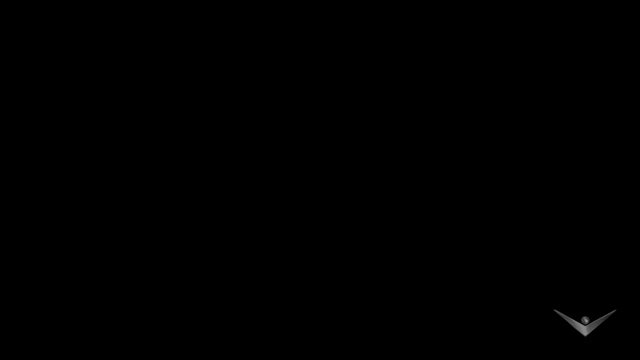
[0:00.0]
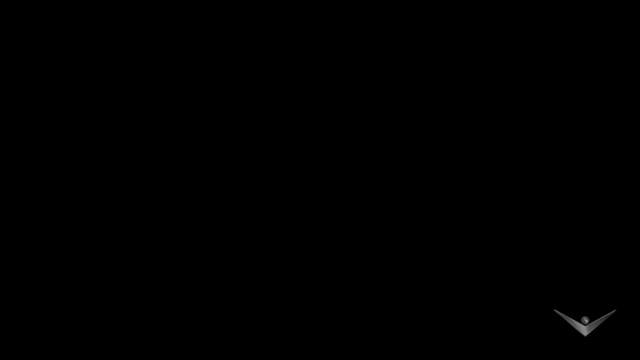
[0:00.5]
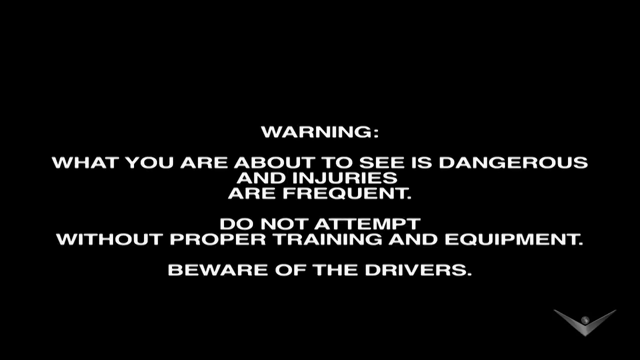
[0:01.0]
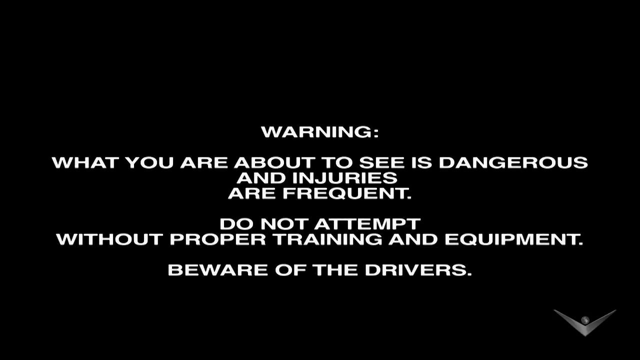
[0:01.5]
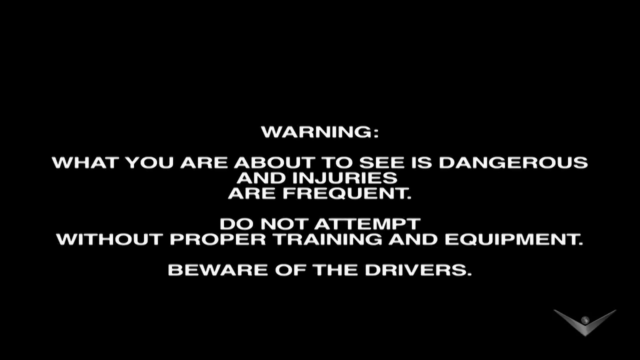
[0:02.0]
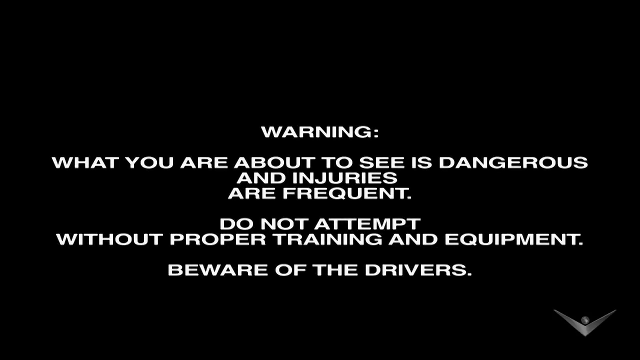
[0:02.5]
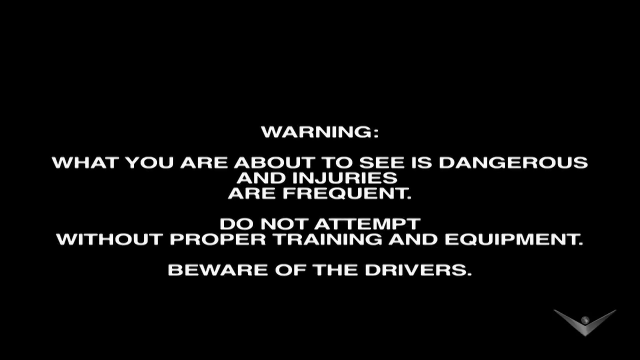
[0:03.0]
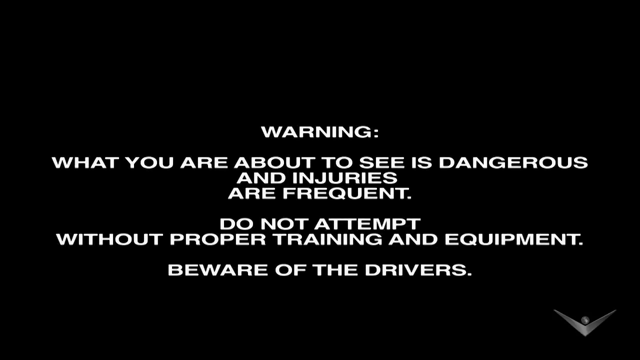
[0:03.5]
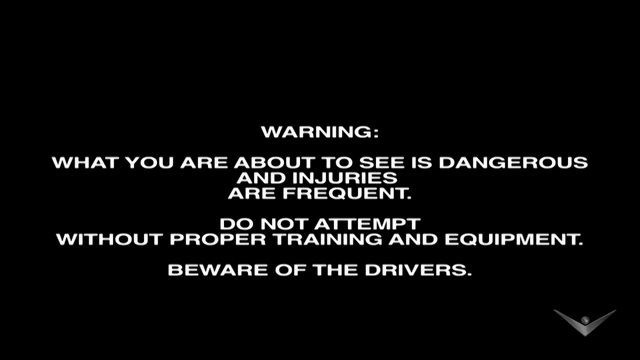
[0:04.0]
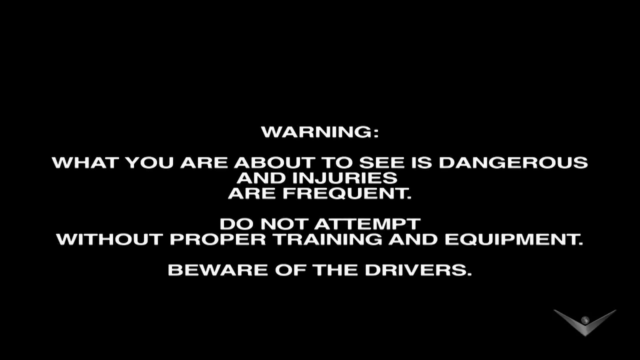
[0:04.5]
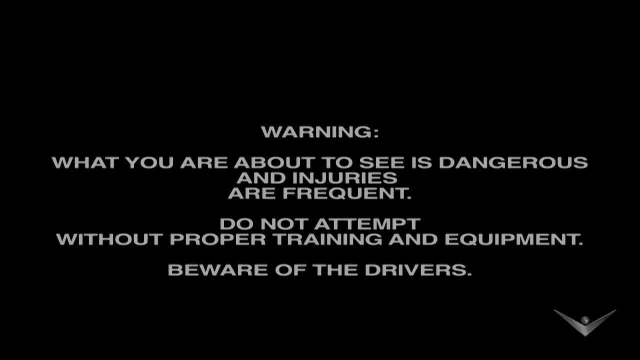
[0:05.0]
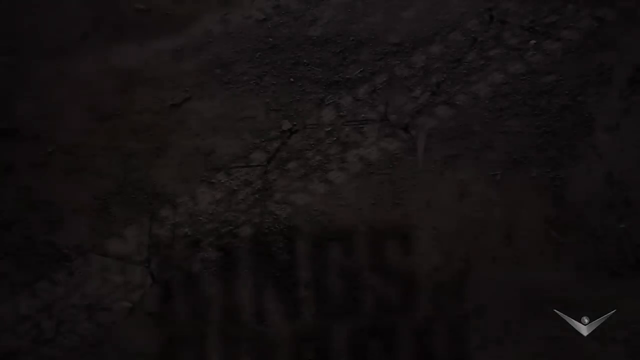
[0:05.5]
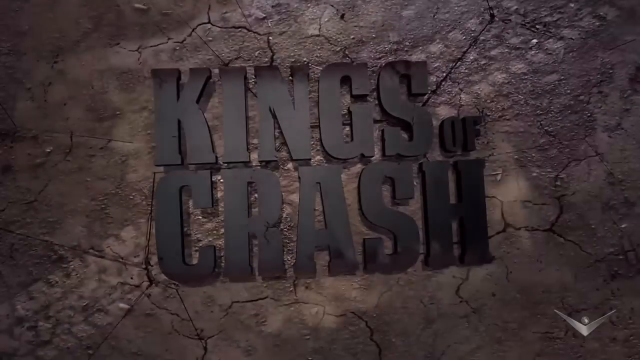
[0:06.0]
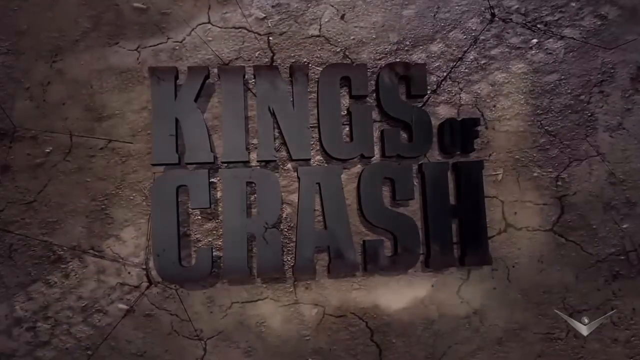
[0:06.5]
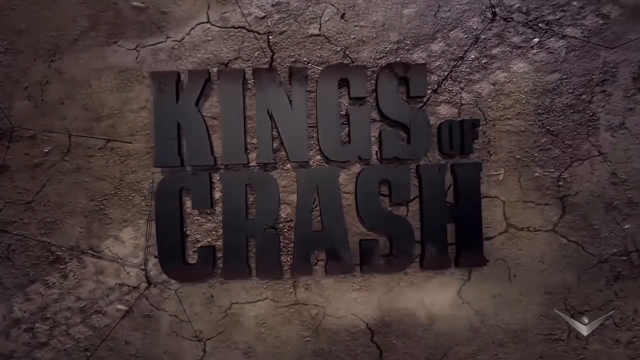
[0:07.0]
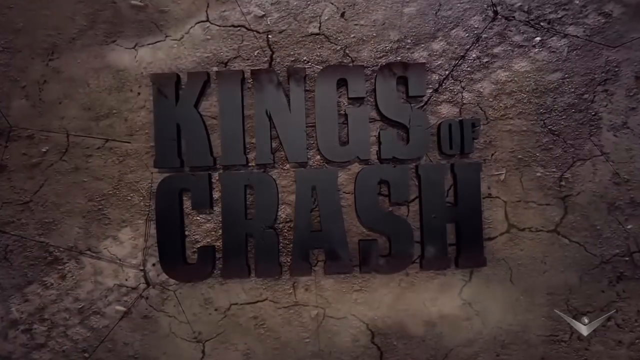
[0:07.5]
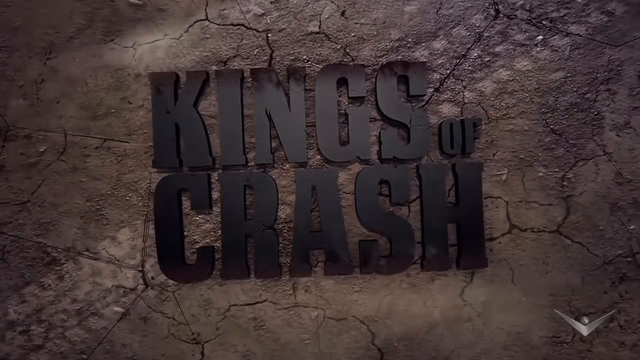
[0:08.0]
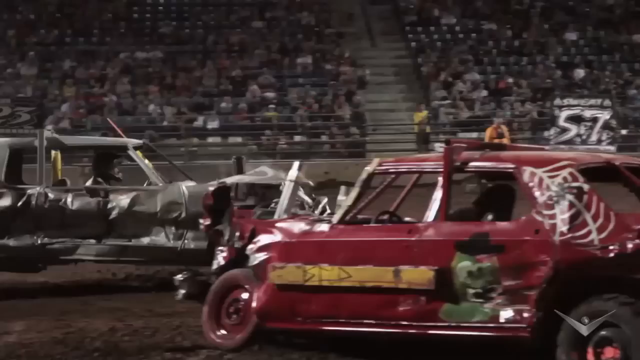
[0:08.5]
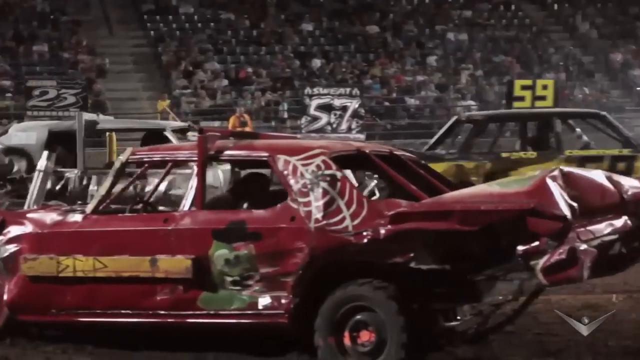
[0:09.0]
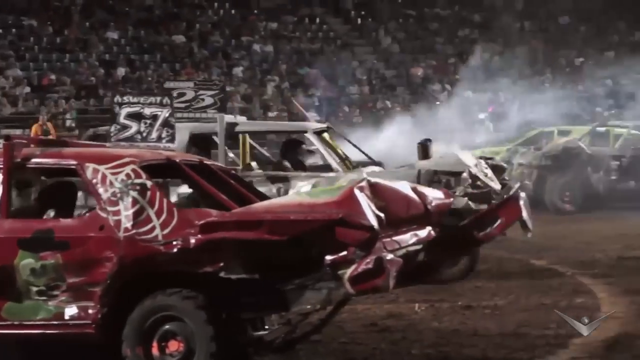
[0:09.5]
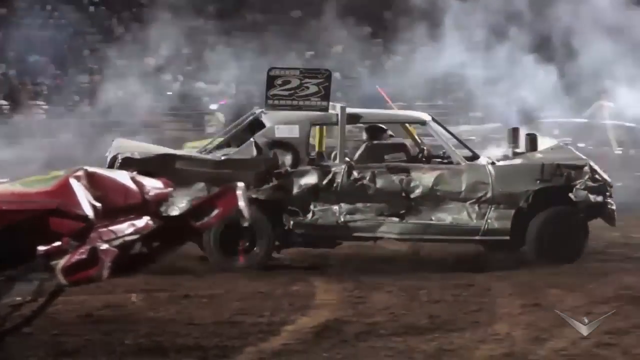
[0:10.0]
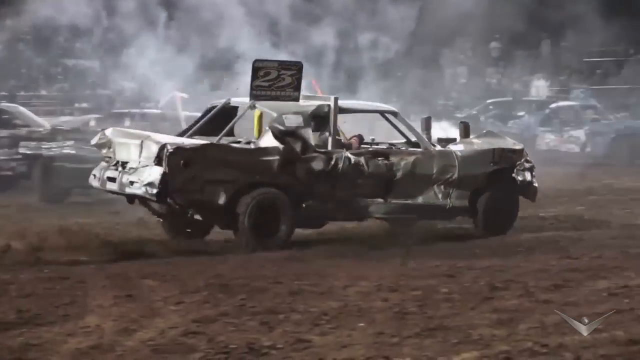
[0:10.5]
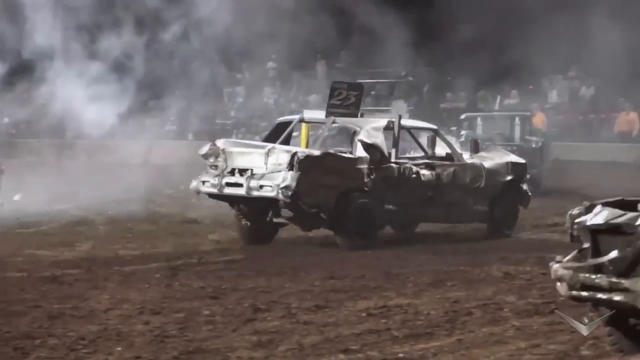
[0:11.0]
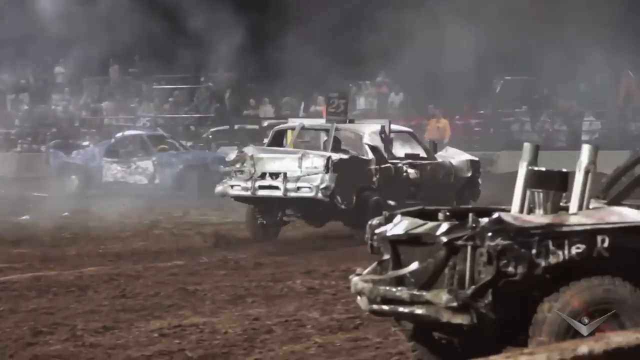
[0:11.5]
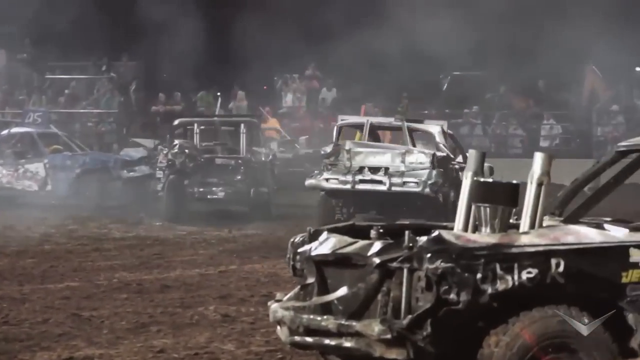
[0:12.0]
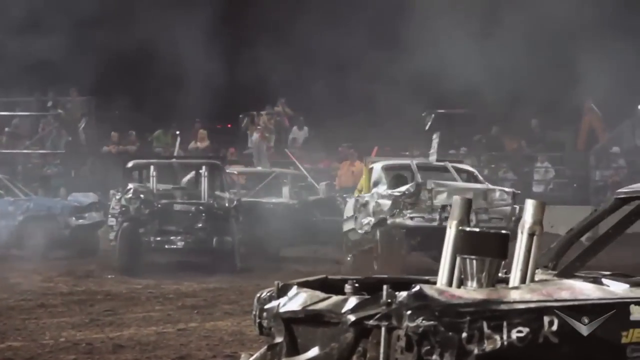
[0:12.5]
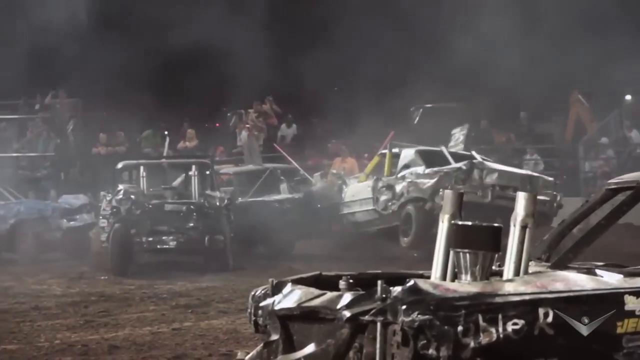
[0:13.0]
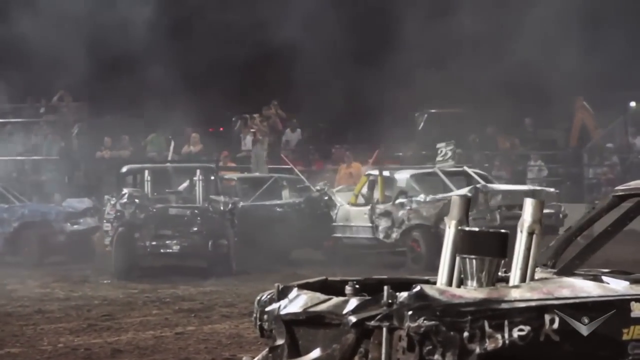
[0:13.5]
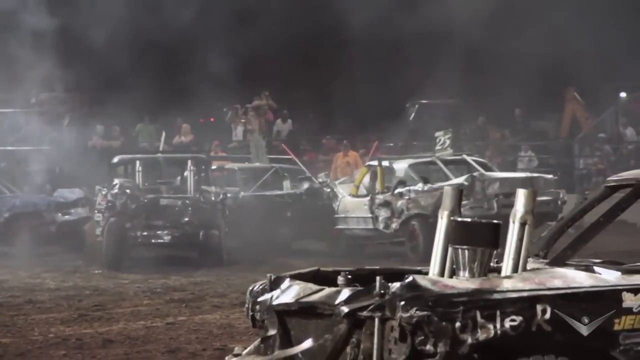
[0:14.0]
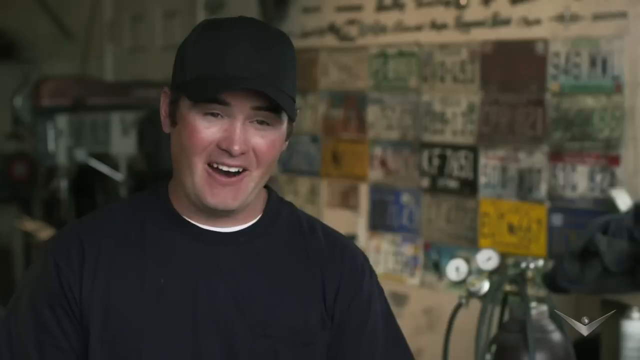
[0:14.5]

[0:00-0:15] A warning appears indicating that what is about to be shown is dangerous and that injuries are frequent, and text says "do not attempt without proper training and equipment." Trucks or cars that have obviously been built to smash into things or into each other, kind of like bumper cars, are shown. The logo for Kings of Crash comes on. A white car with what is apparently the number 25 above it moves very slowly, at what looks like about 15 miles per hour, and smashes into a green car that looks to be stalling and trying to reverse. Several other cars are around, either immobile, possibly parked there as obstacles, or possibly put out of commission by hard hits. Toward the end, a white man in a black cap and a black shirt is very excited, talking, smiling and looking very happy.